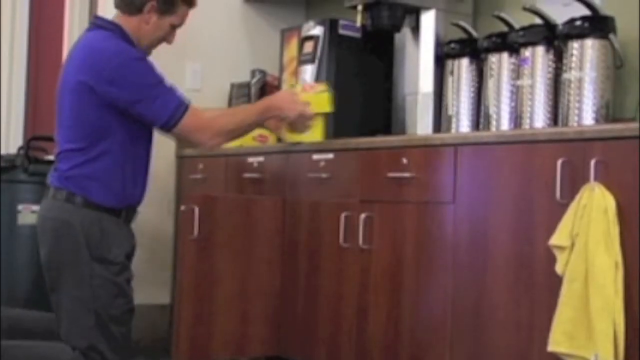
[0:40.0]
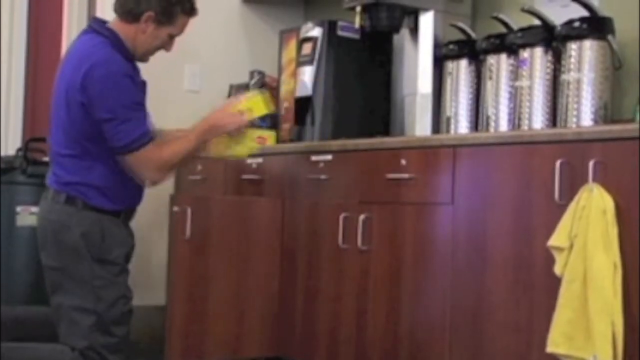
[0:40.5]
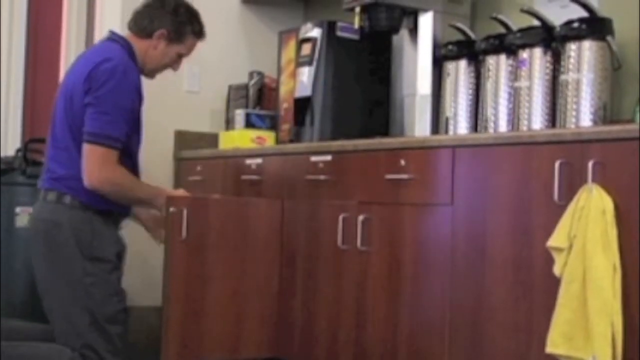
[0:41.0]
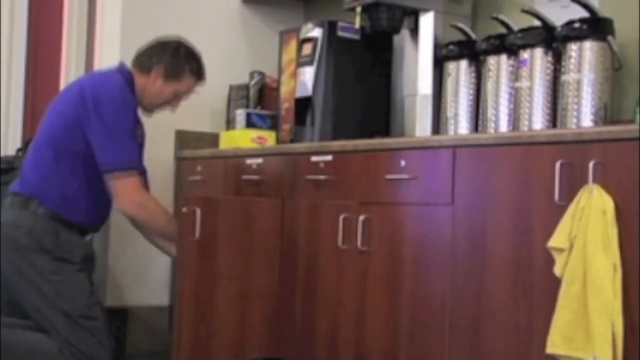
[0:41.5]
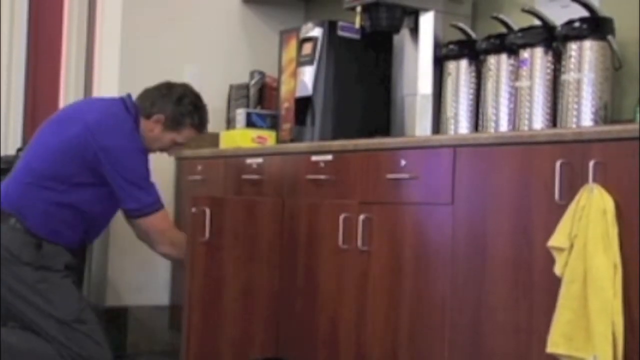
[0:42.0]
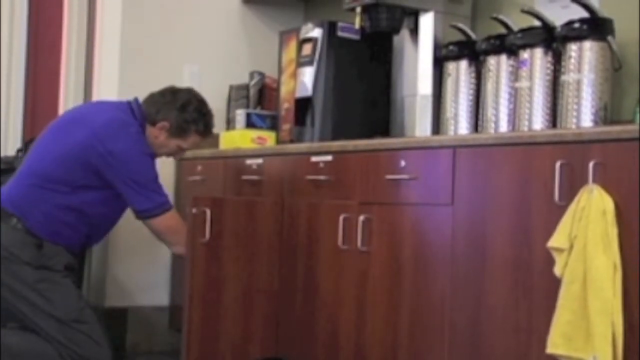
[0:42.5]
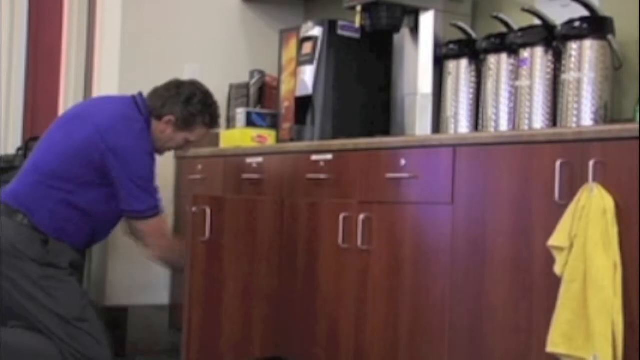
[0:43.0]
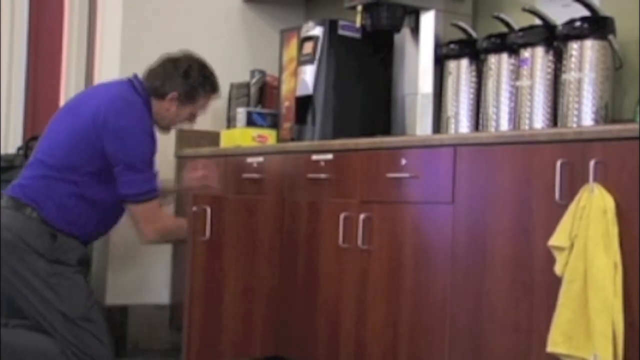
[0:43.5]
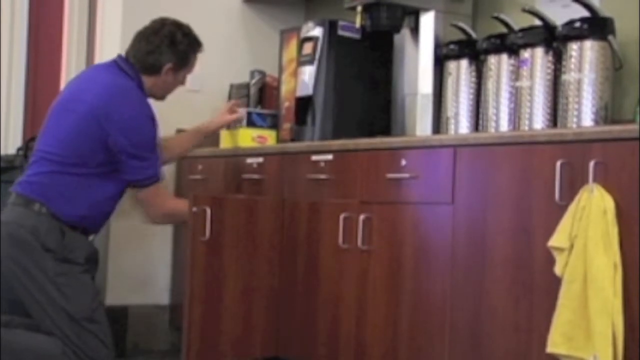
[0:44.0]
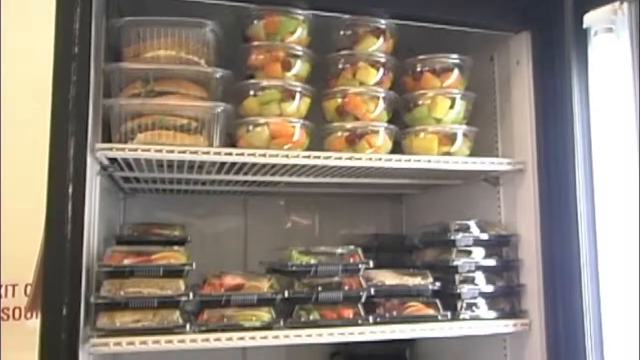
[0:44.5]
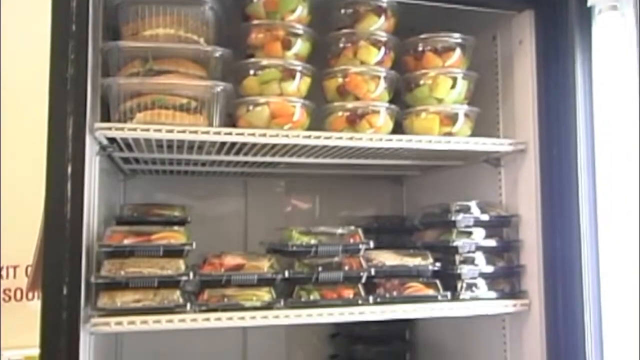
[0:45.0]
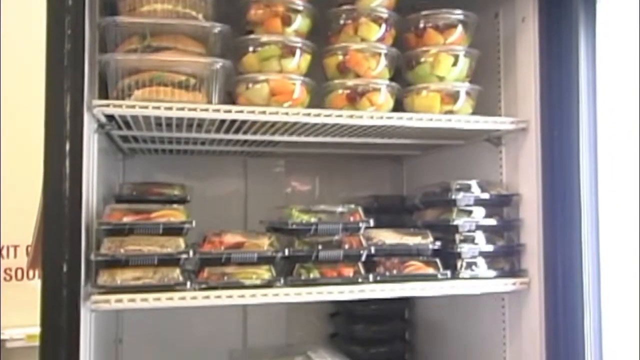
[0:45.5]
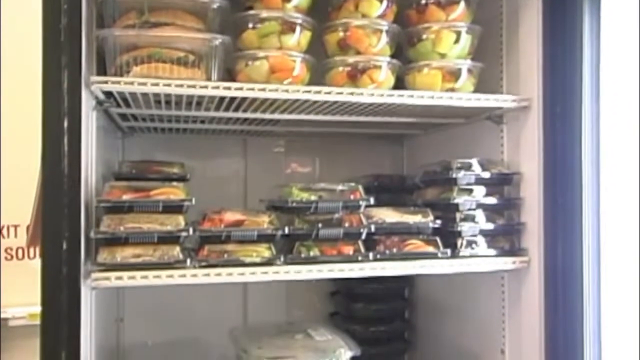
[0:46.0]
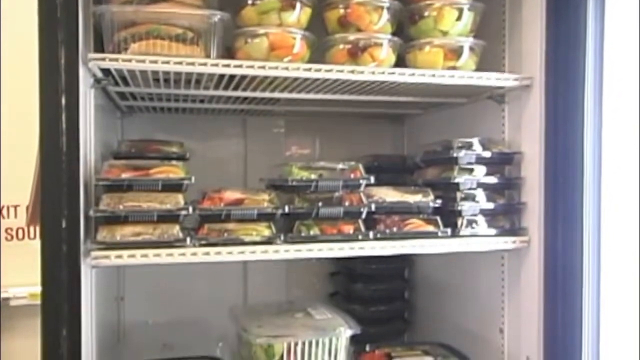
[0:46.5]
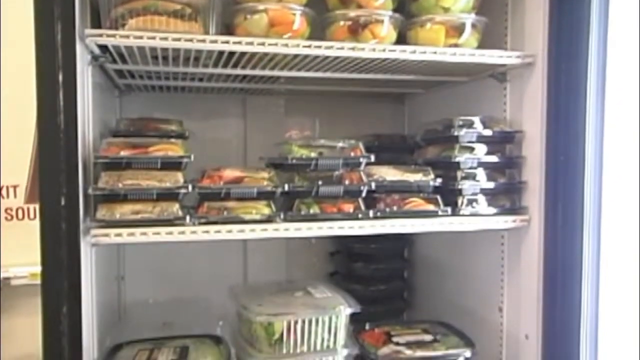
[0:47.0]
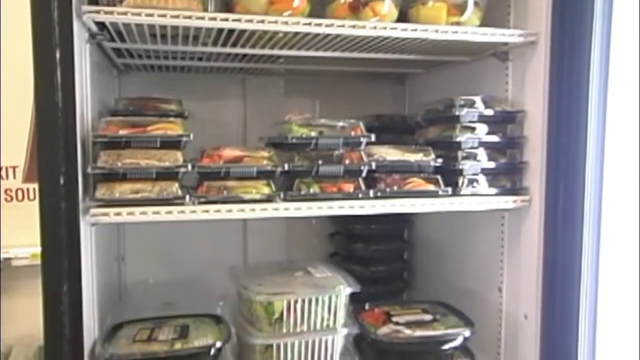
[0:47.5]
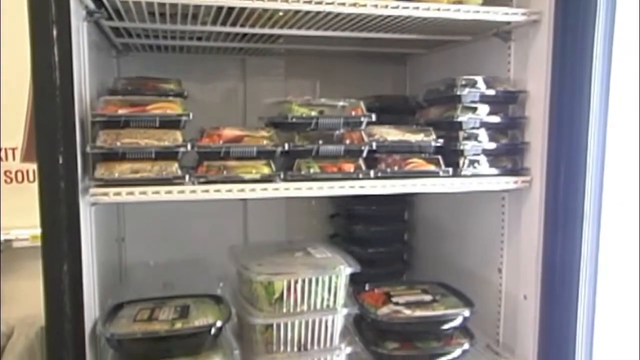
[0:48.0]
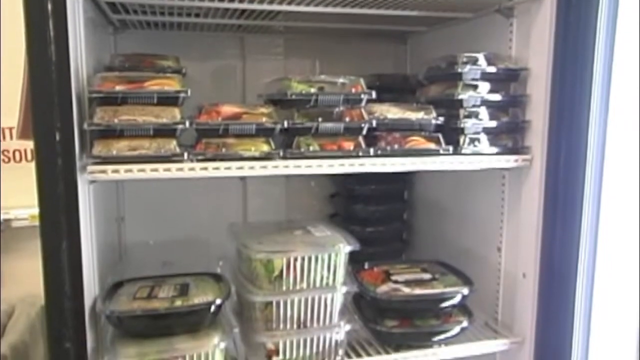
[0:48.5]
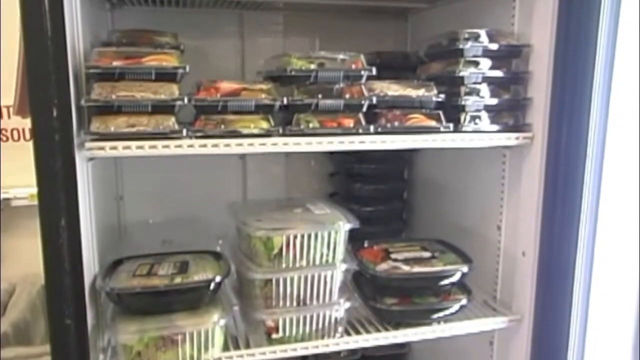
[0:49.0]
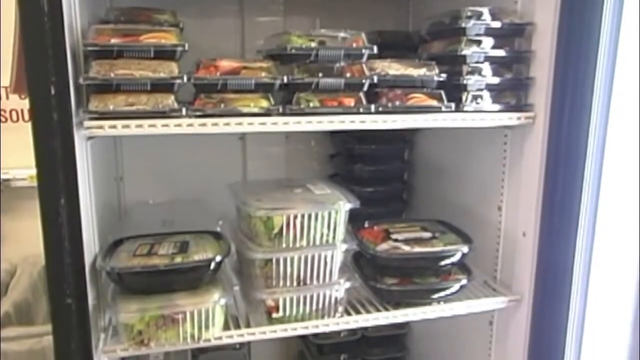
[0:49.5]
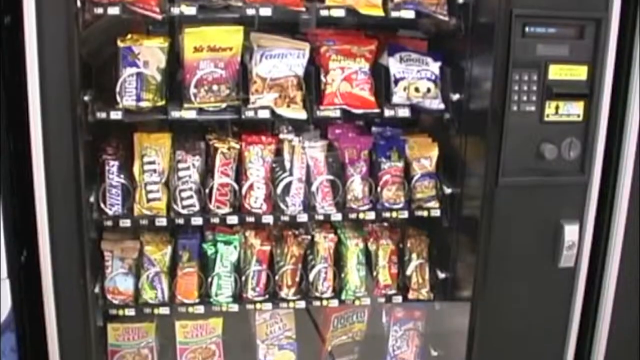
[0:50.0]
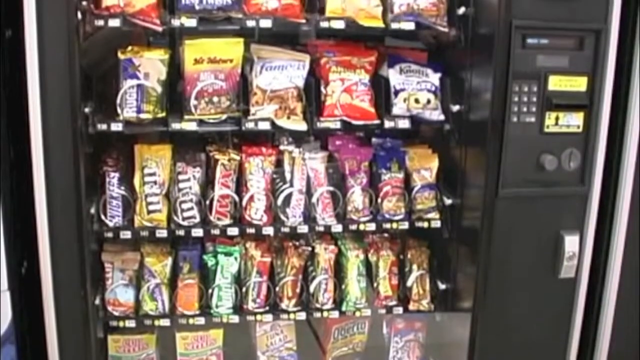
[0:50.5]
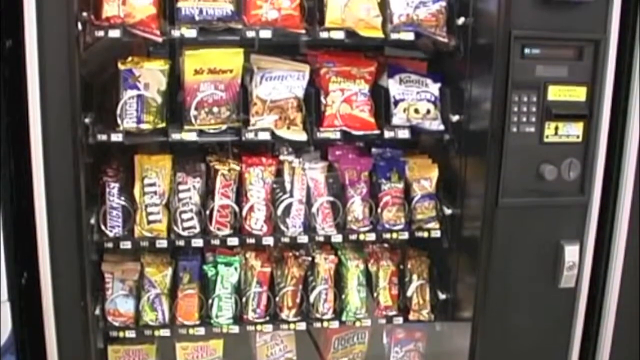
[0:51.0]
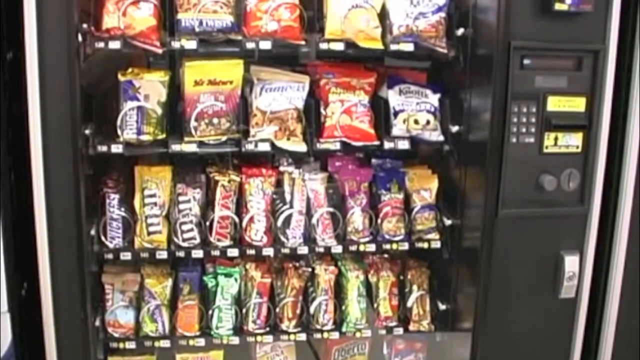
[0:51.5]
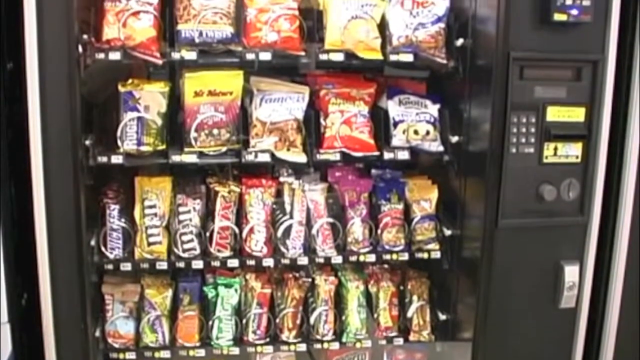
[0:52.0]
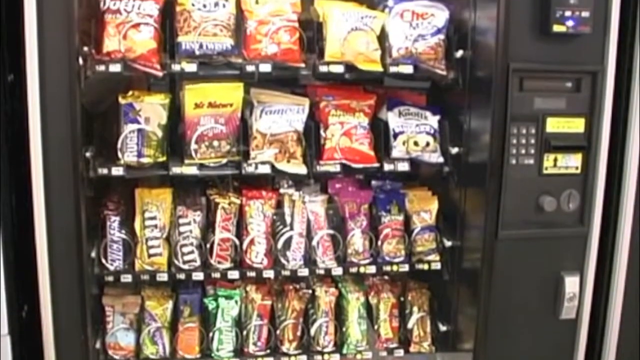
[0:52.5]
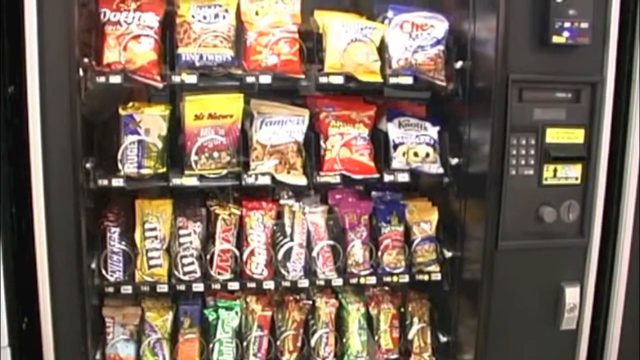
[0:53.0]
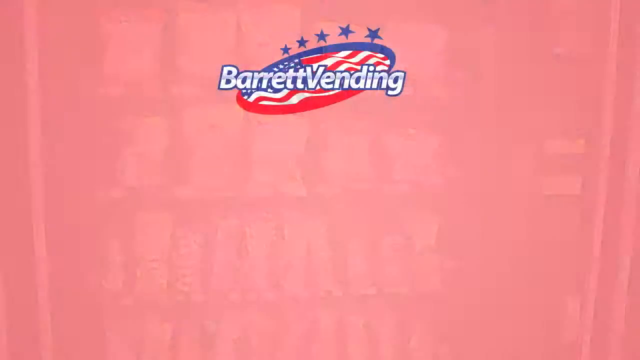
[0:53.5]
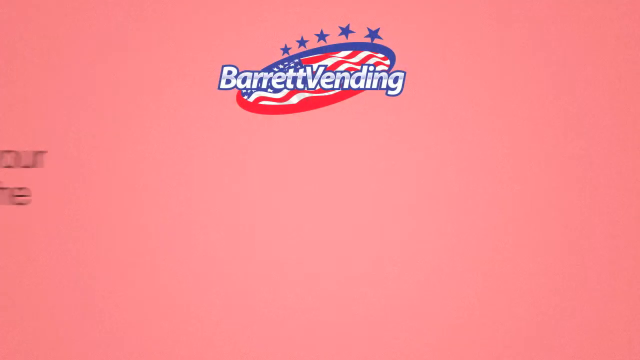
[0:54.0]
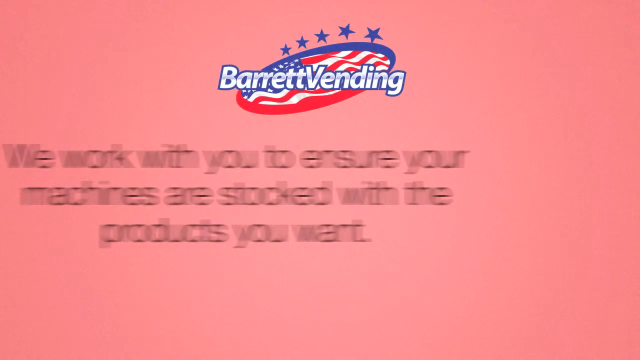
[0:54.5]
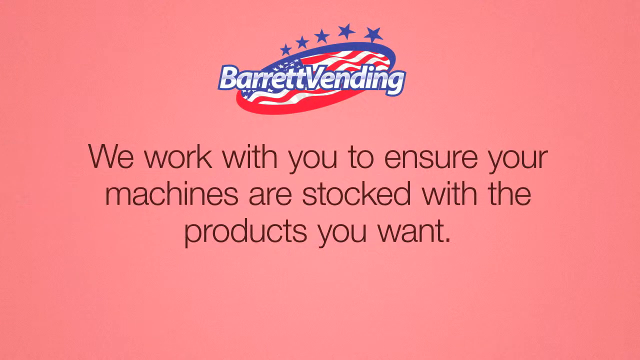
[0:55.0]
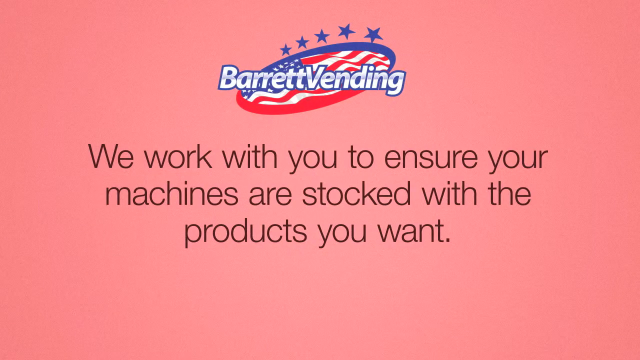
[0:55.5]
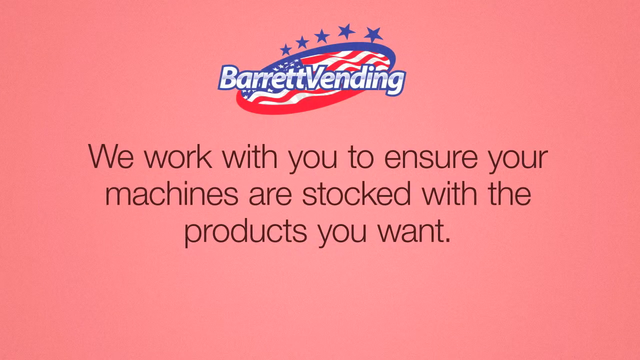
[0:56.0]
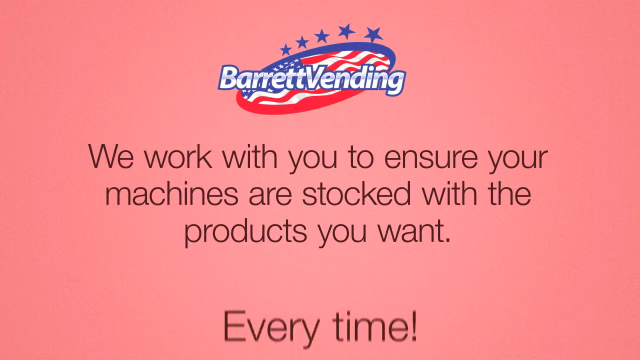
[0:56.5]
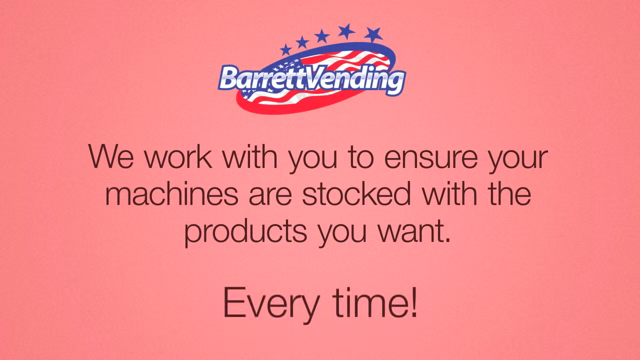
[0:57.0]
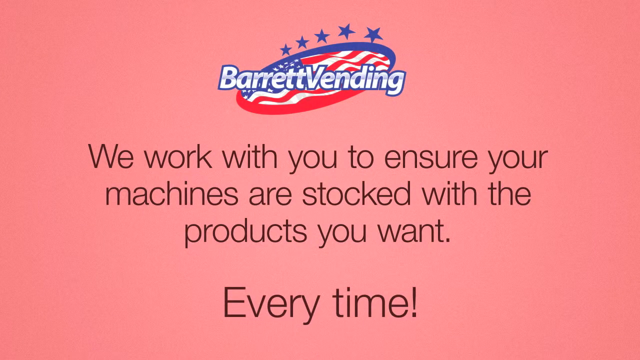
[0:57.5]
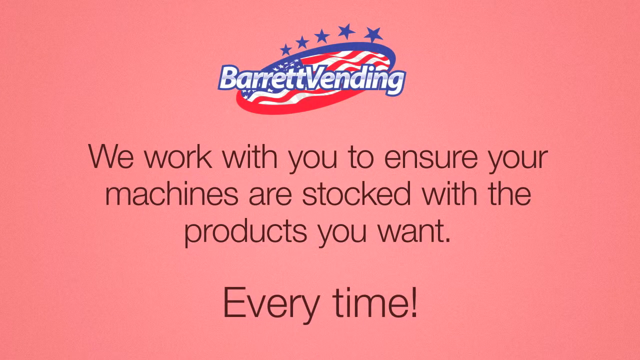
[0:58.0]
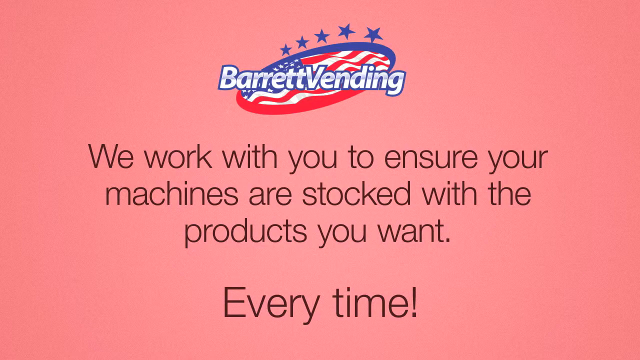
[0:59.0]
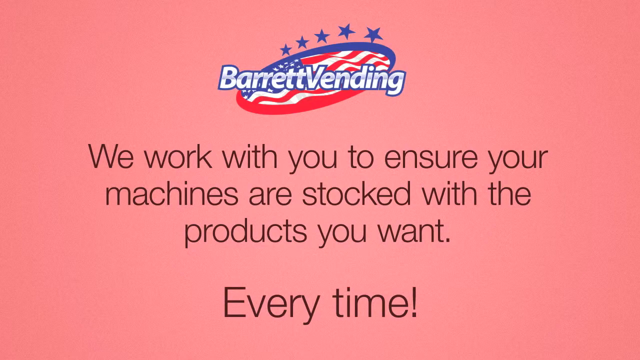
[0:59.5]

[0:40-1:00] A man restocks shelves and organizes items for people to take from vending machines. A refrigerator appears holding what seem to be fruits, fruit salad, possibly sandwiches, and foods in packs; there are a lot of fruits, vegetables and other healthy foods in it. Another vending machine holds snacks such as M&Ms, cereal bars and Doritos. The promotion continues with the message: "we work with you to ensure your machines are stocked with the products that you want. Every time."